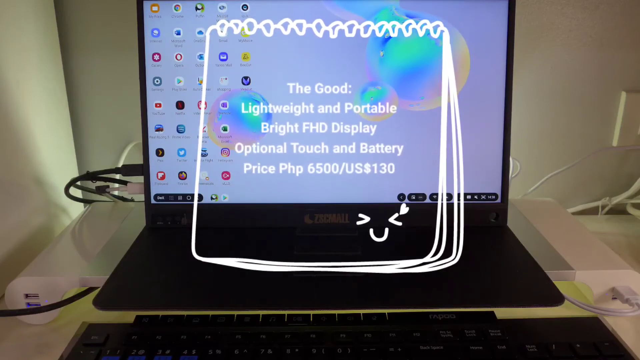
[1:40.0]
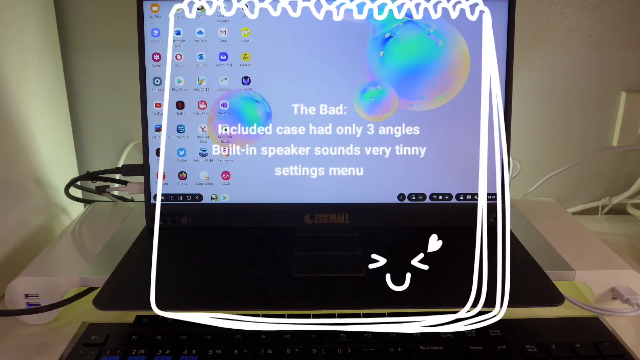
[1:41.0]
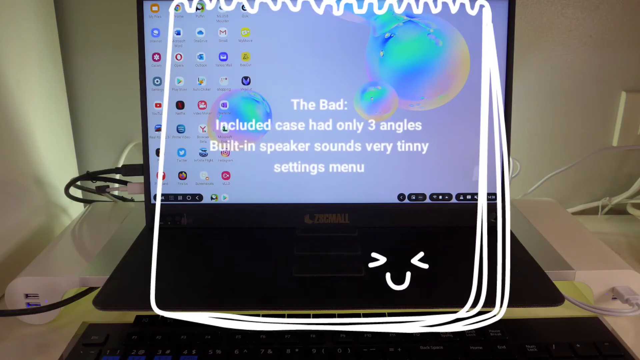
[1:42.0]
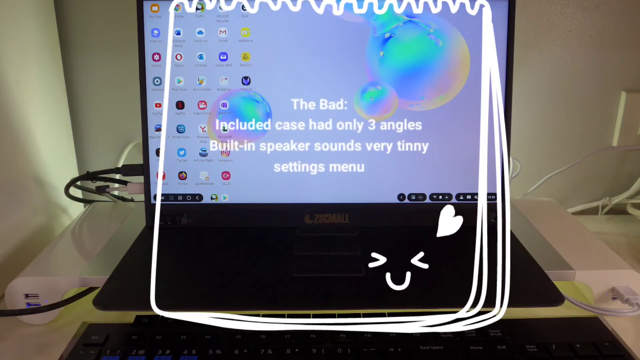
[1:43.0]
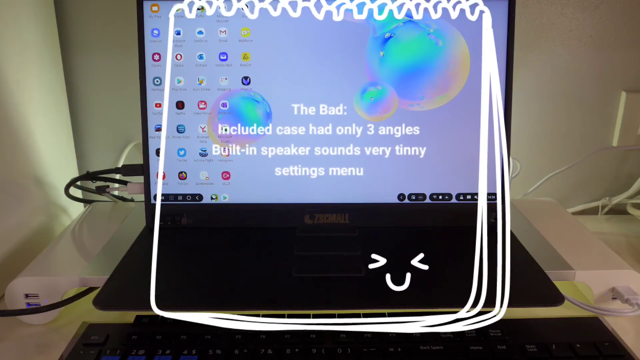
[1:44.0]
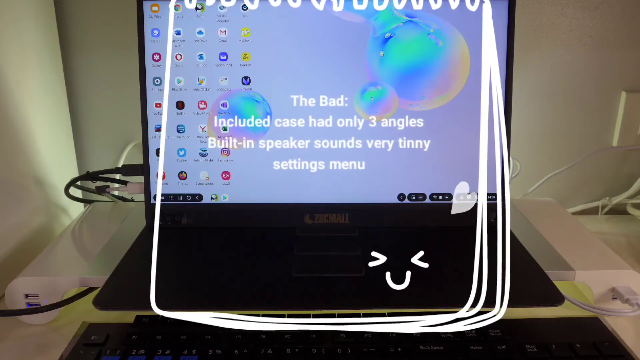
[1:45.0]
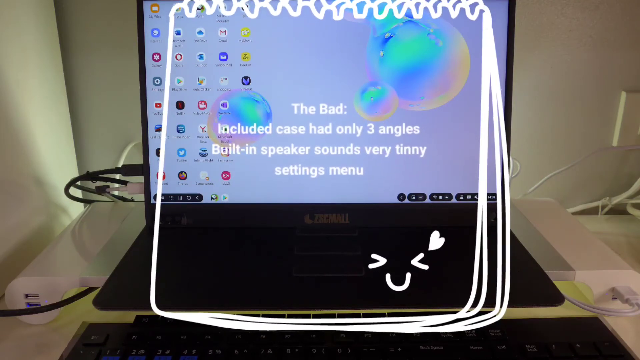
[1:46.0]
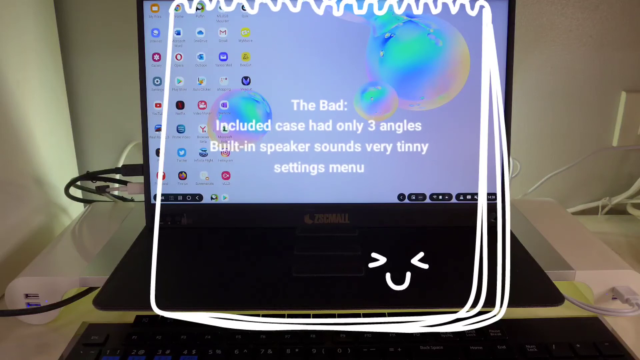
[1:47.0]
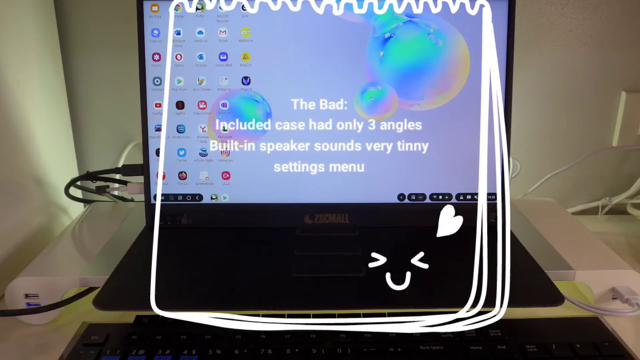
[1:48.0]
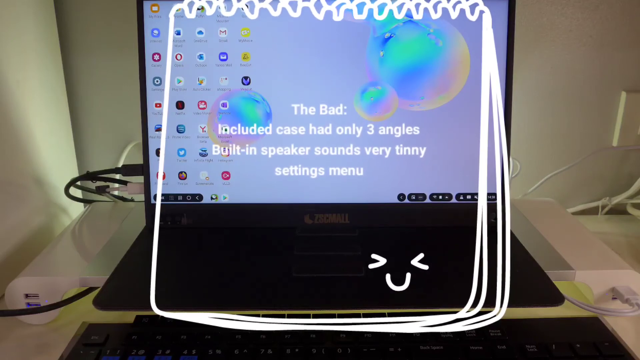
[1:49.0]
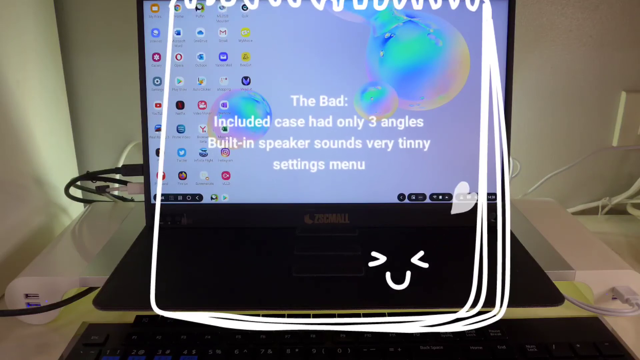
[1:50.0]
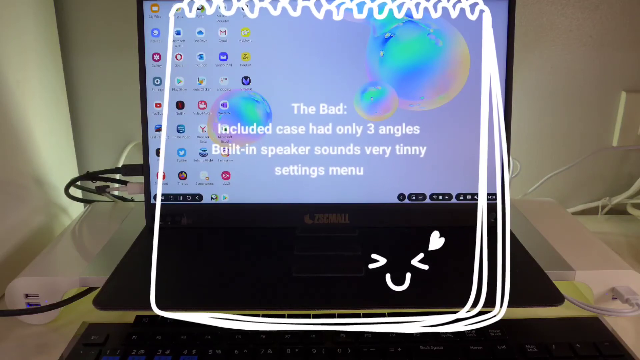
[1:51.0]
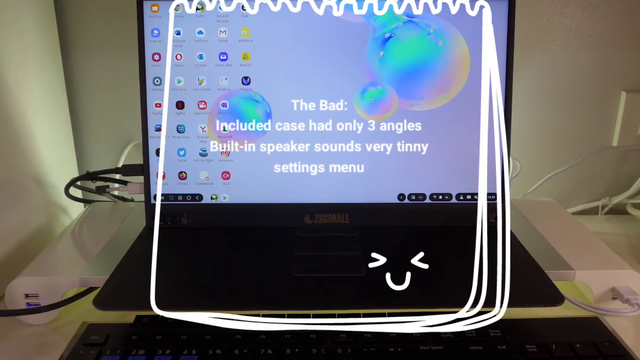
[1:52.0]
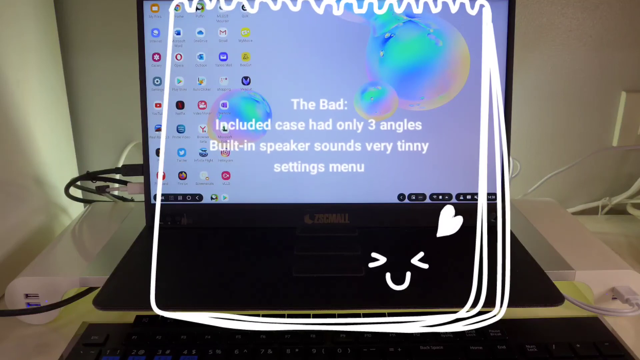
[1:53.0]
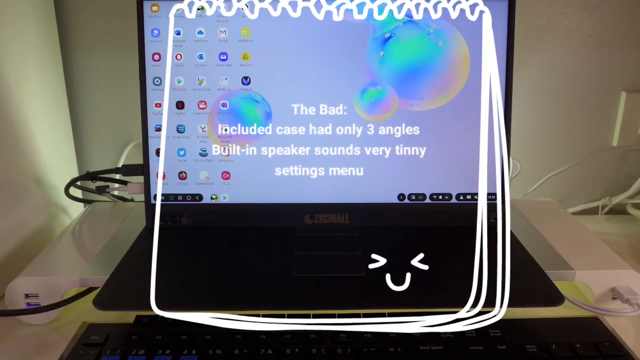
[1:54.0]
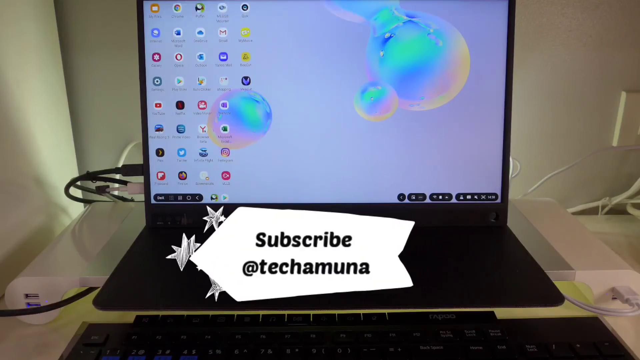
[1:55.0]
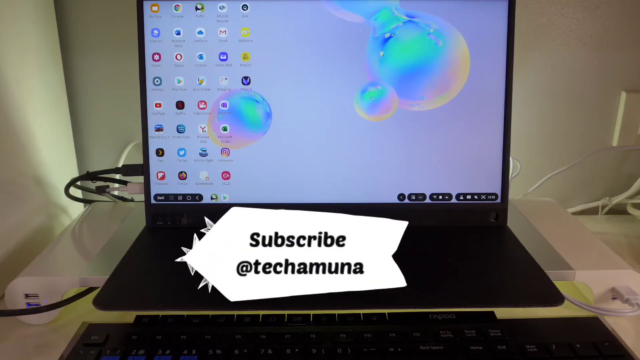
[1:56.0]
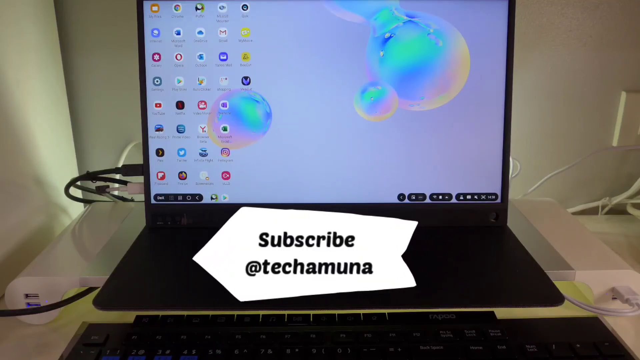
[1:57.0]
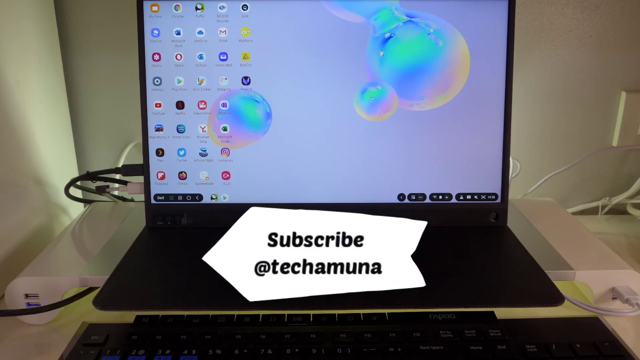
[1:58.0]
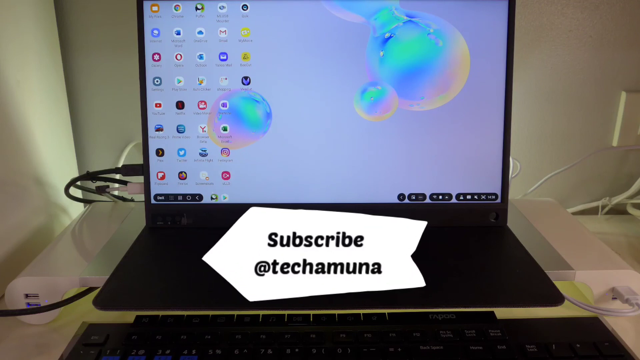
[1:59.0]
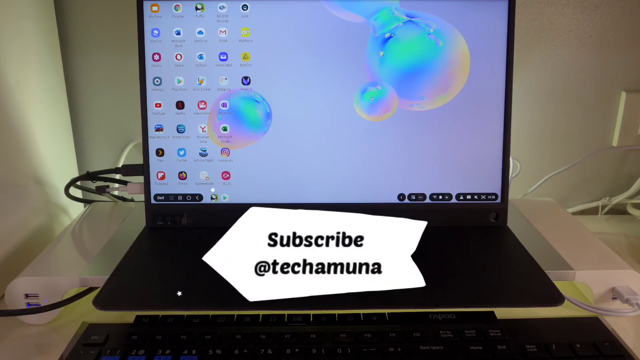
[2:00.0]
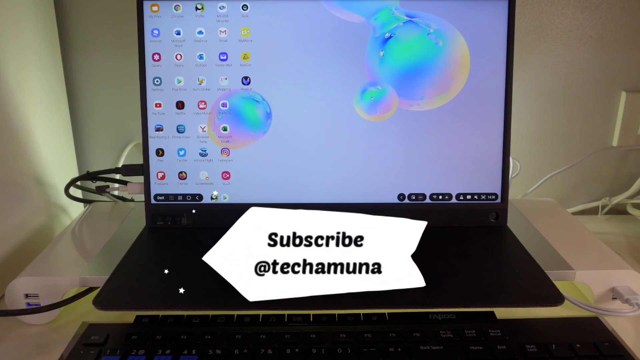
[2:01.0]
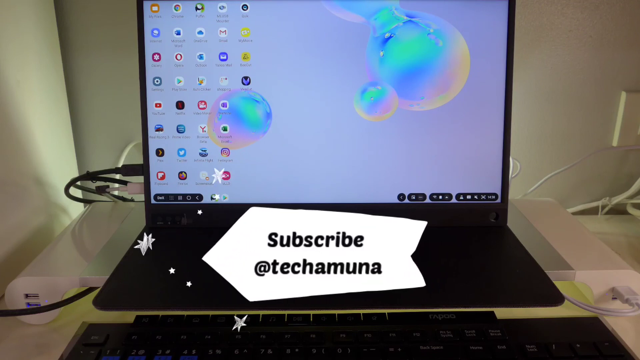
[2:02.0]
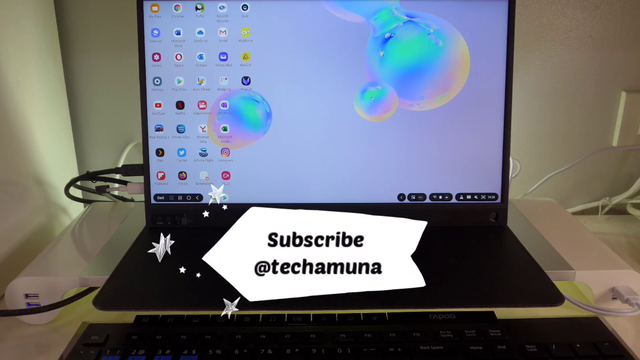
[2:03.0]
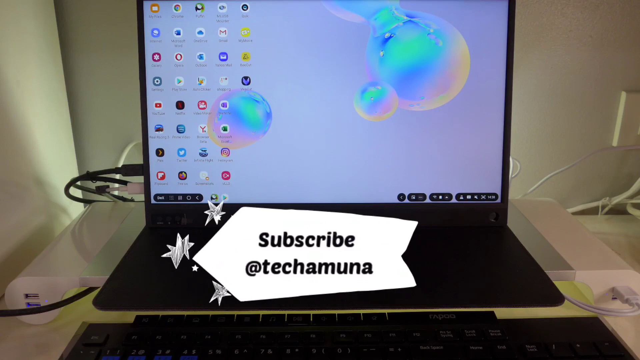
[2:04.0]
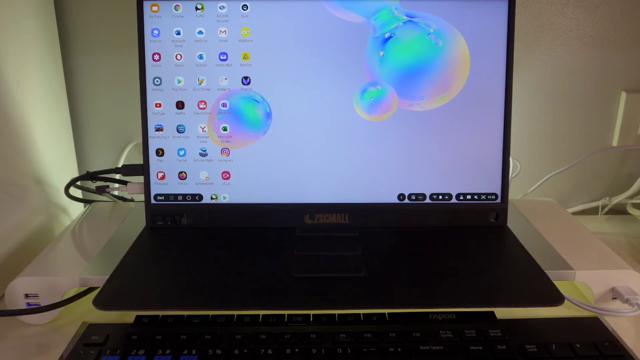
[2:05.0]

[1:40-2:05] The view looks dead on at a tablet screen, presumably a tablet, showing a light blue background with a bunch of bubbles and five columns of icons. Below the tablet is a stand, or maybe a dock, basically just a black rectangle; it is rather dark, so few details are visible. A bunch of wires are plugged into the left-hand side of the tablet. An overlaid graphic of a white outline of a notepad, drawn in a cartoon style, sits over the whole scene, with a smiley face in the lower right pulsing a heart off its top. Text in the middle reads "the bad included case had only three angles, built-in speaker sounds, very tinny settings menu". The whole graphic keeps pulsing: the text bobs up and down, as do the top of the notepad and the heart. Below it all is a white table. The scene then fades out to an overlaid graphic with a left arrow at the bottom and black text reading "subscribe at Techamuna".